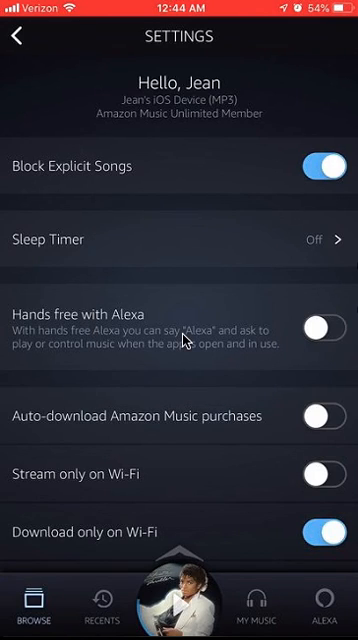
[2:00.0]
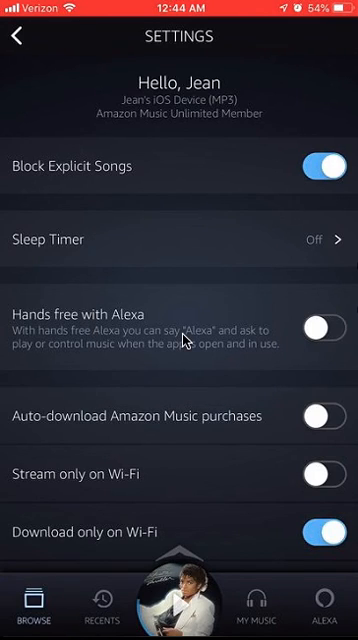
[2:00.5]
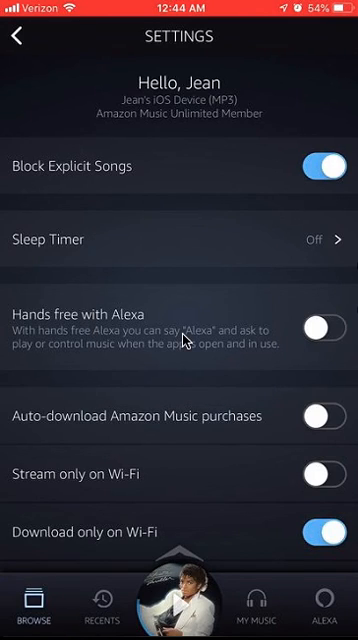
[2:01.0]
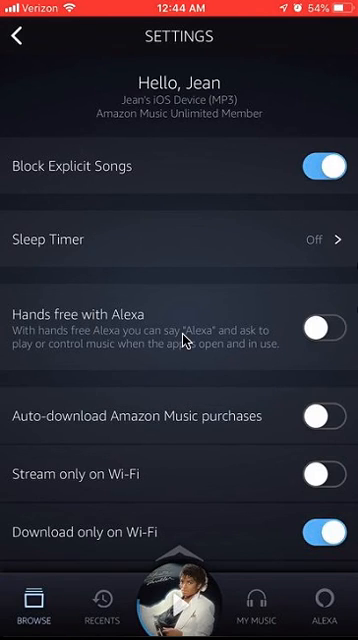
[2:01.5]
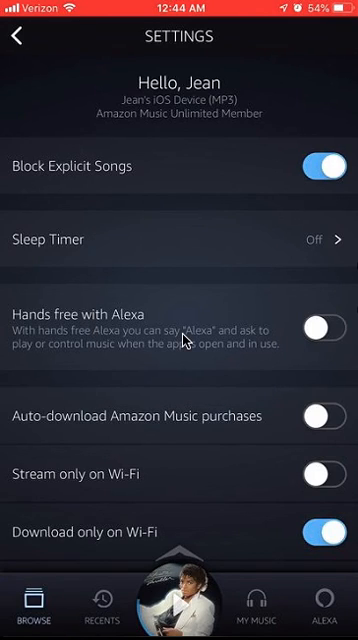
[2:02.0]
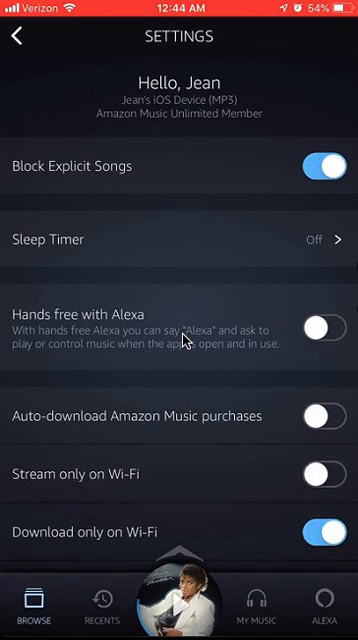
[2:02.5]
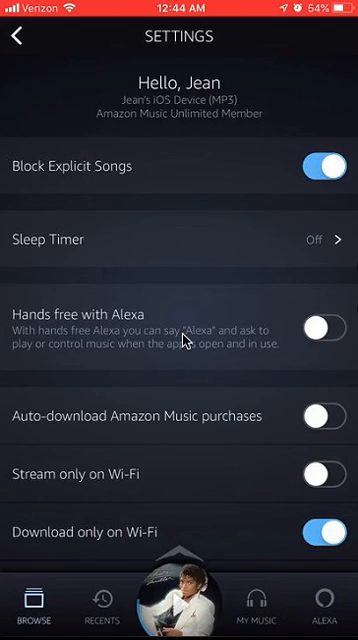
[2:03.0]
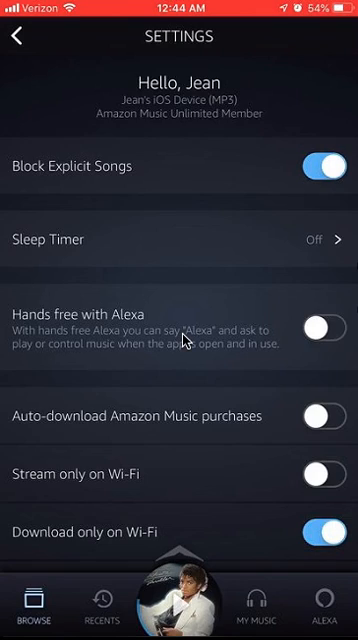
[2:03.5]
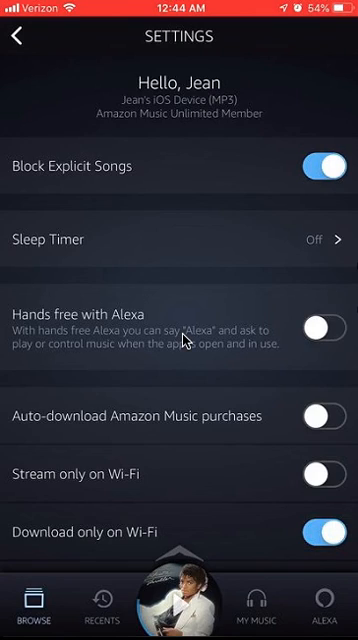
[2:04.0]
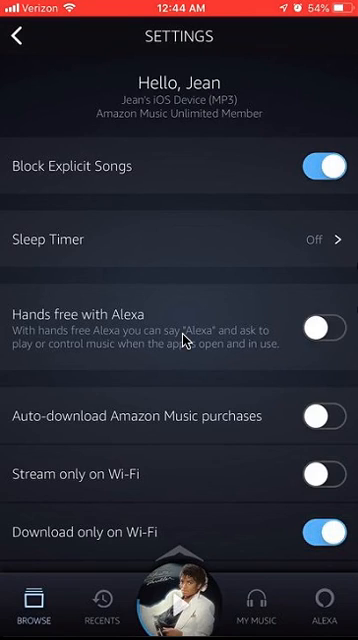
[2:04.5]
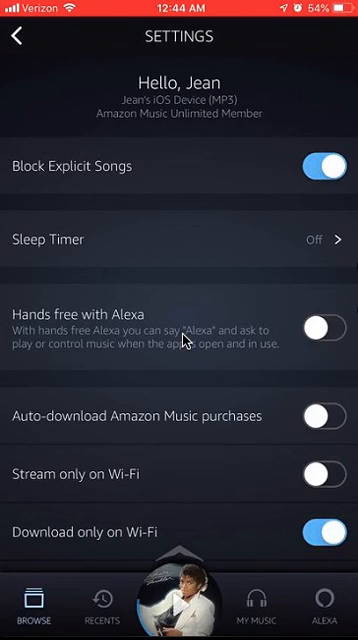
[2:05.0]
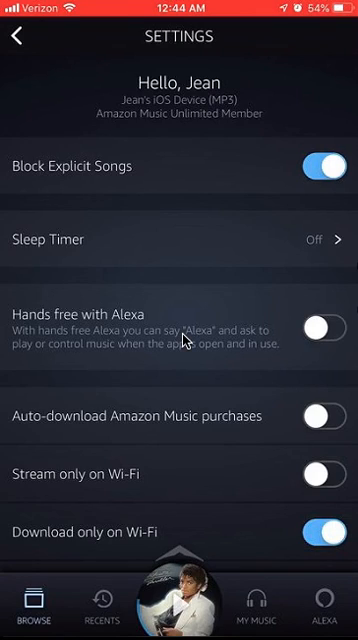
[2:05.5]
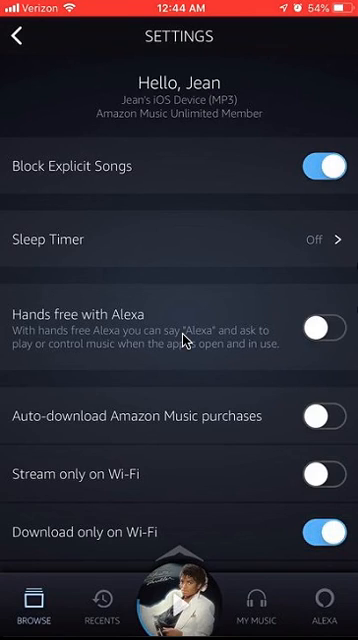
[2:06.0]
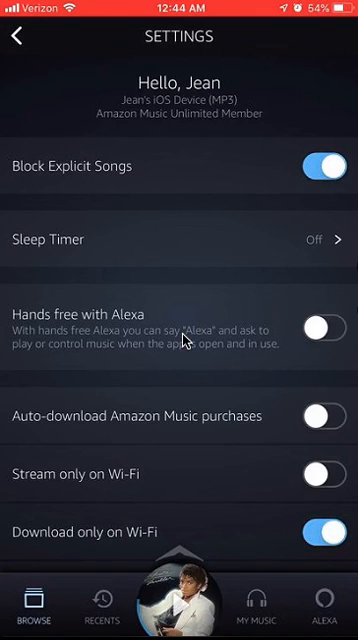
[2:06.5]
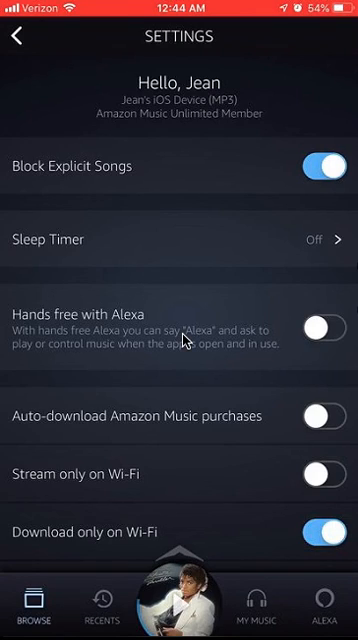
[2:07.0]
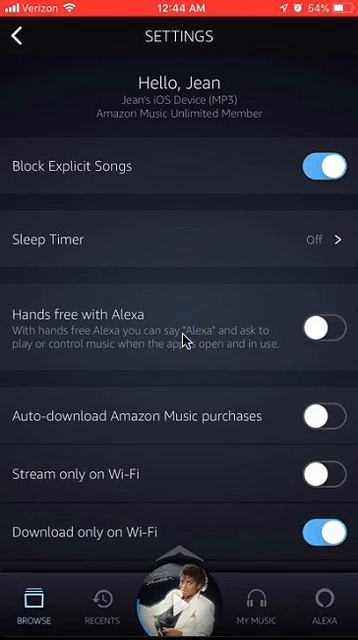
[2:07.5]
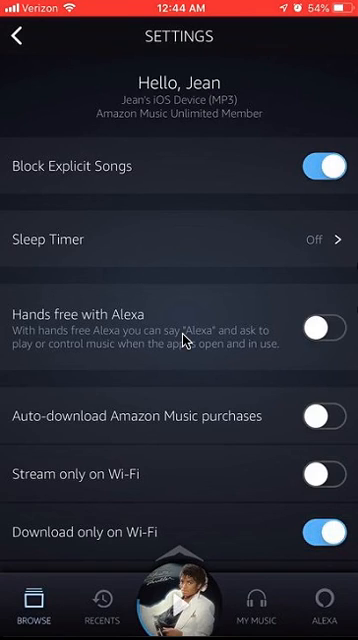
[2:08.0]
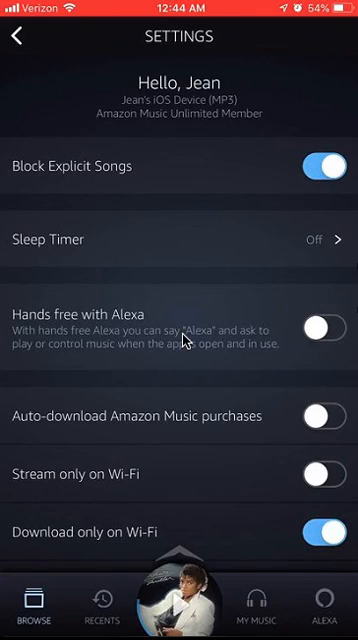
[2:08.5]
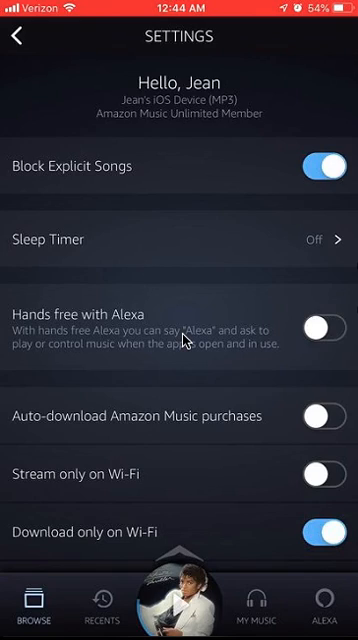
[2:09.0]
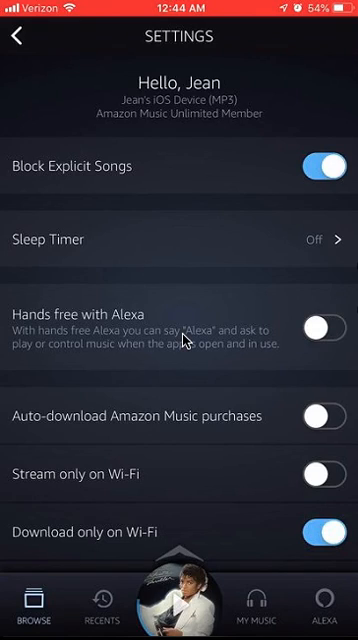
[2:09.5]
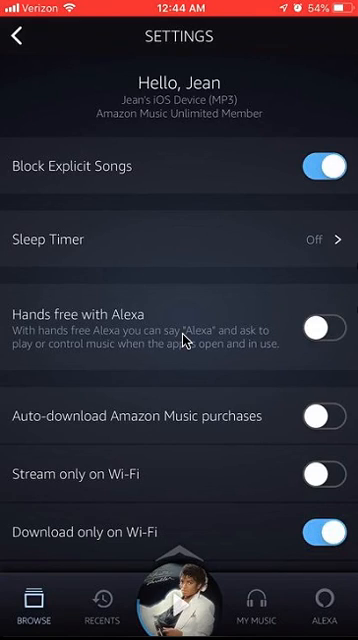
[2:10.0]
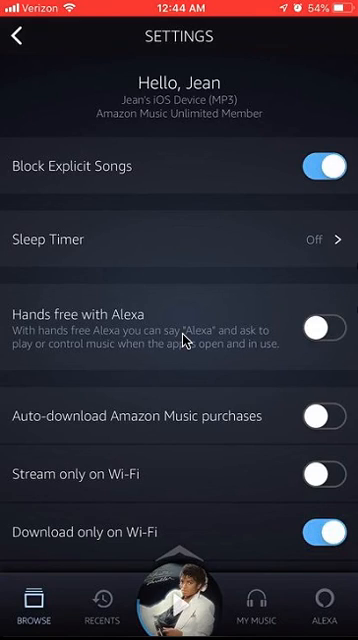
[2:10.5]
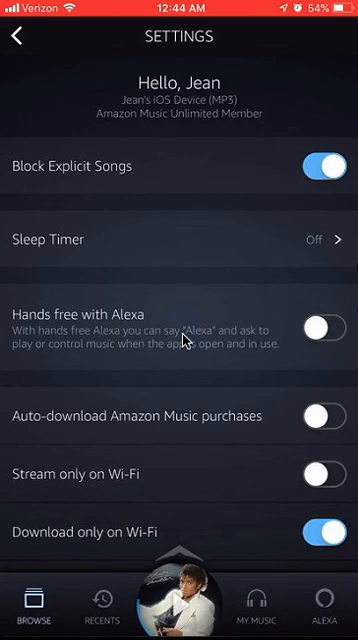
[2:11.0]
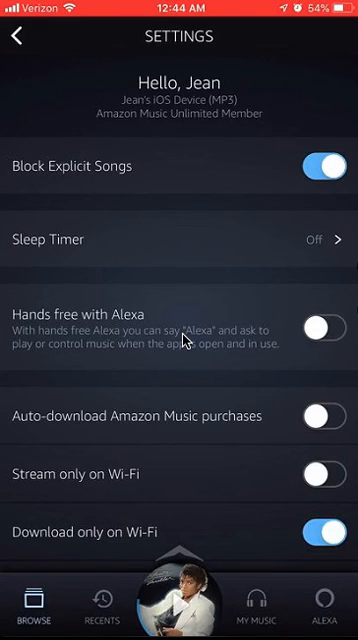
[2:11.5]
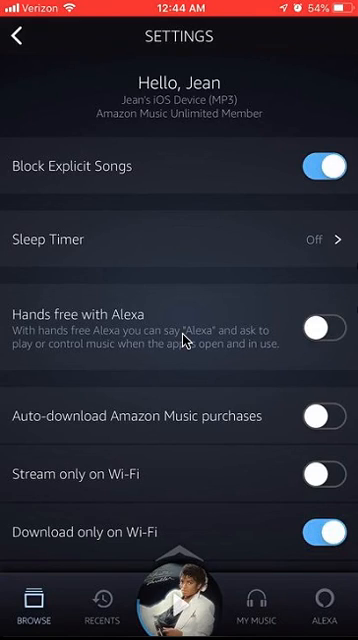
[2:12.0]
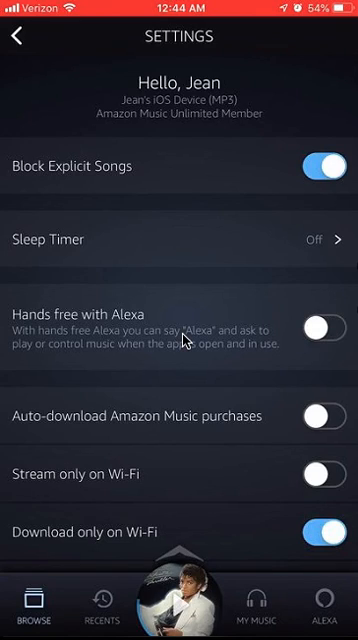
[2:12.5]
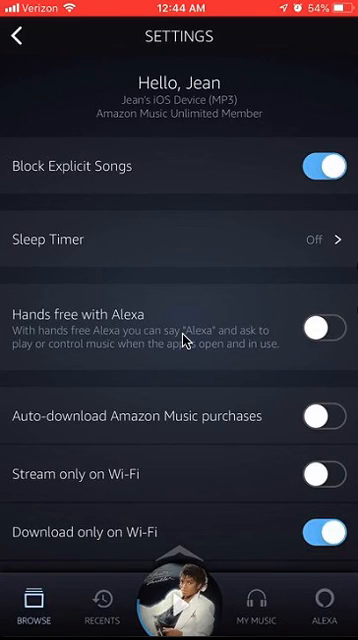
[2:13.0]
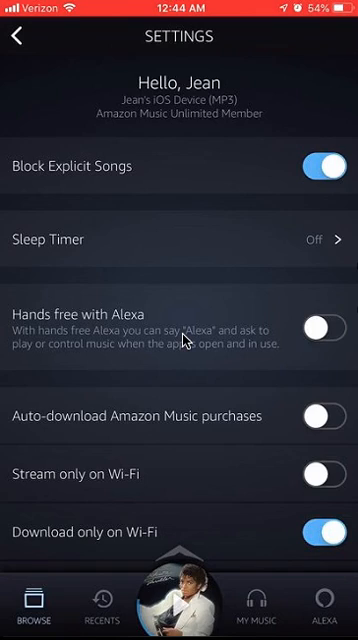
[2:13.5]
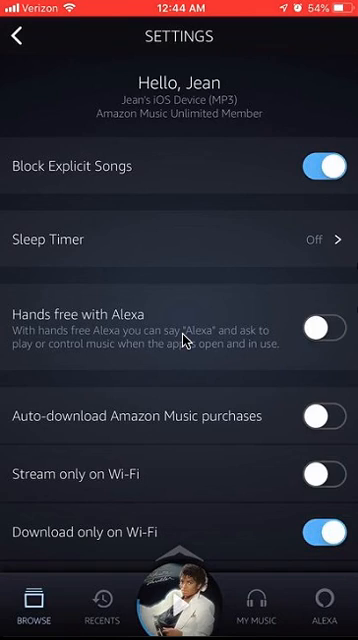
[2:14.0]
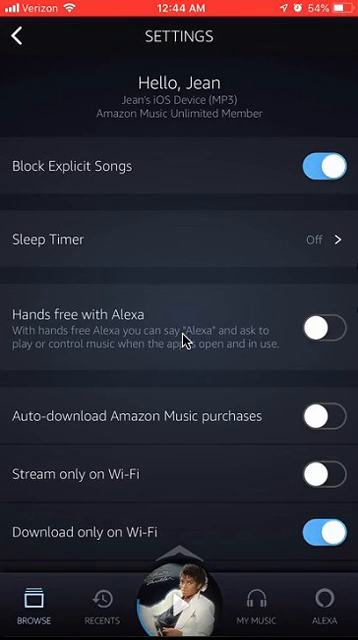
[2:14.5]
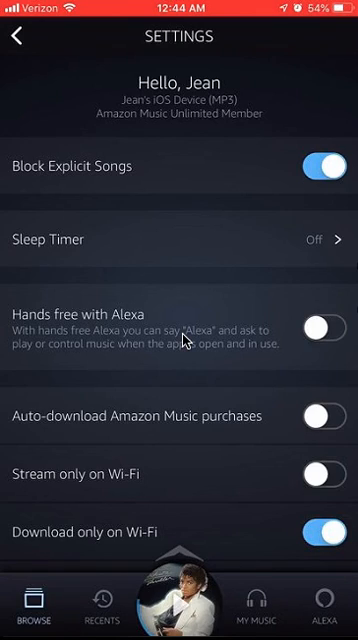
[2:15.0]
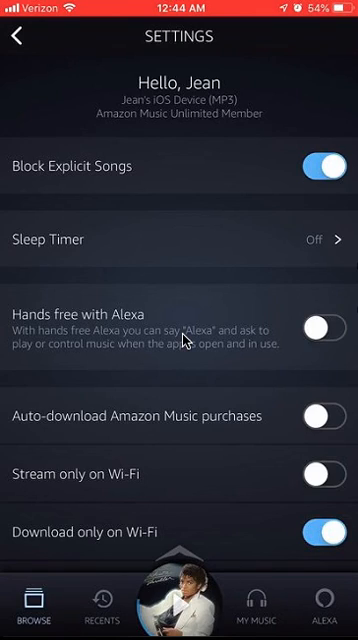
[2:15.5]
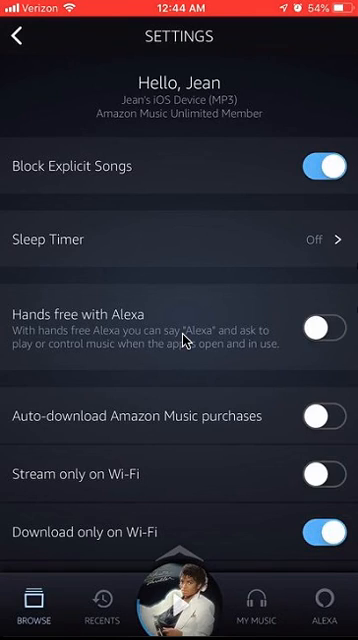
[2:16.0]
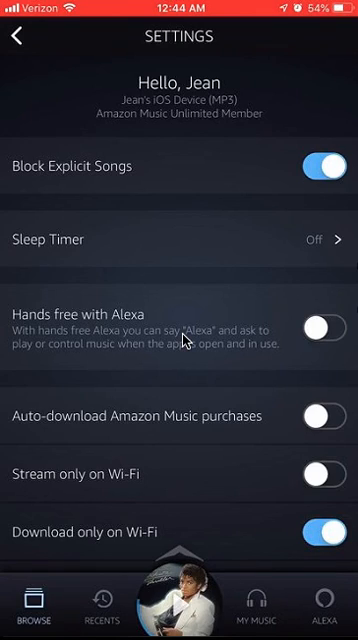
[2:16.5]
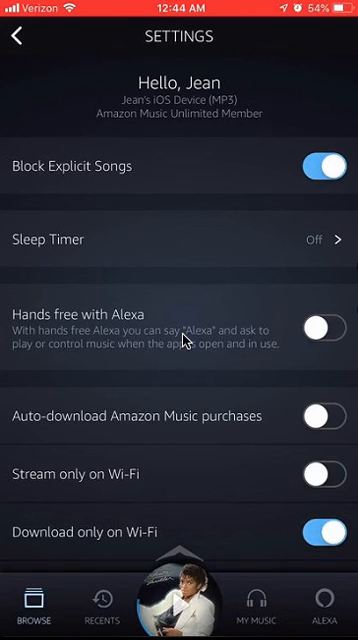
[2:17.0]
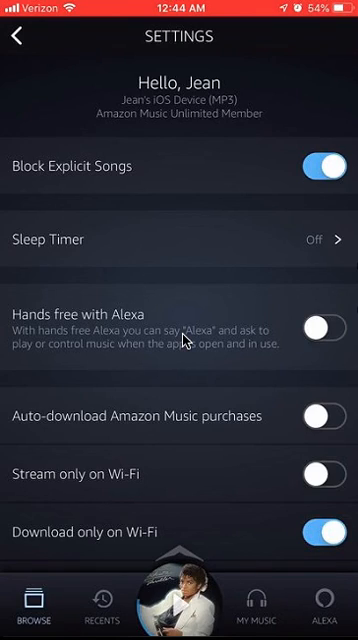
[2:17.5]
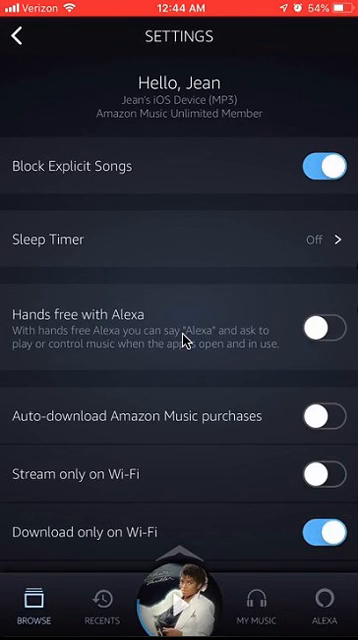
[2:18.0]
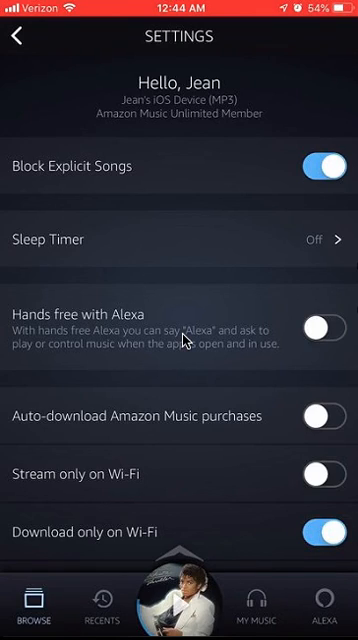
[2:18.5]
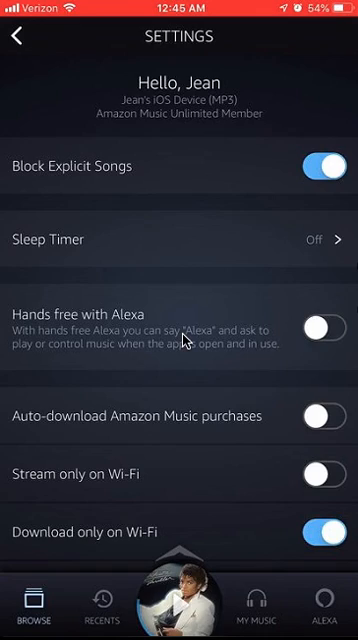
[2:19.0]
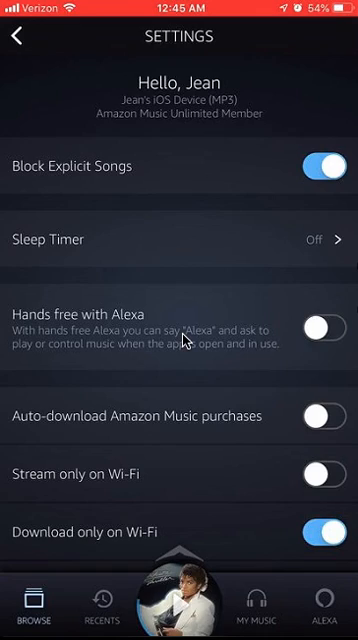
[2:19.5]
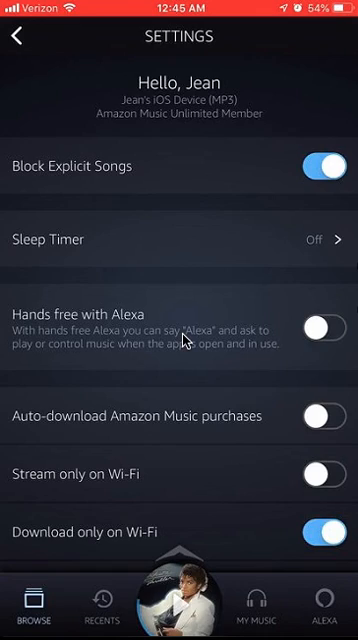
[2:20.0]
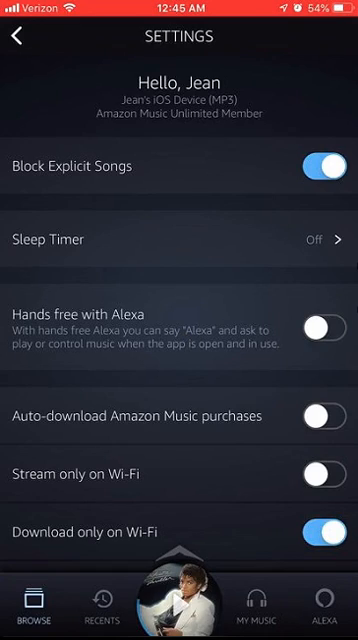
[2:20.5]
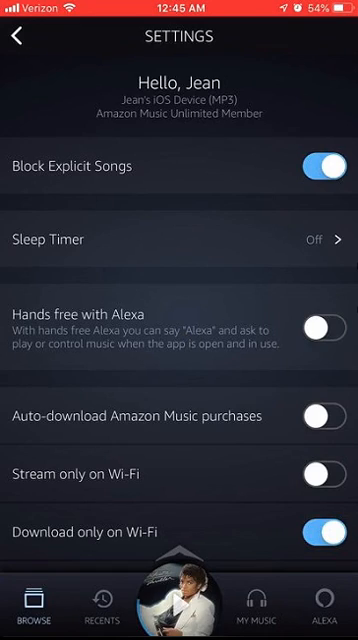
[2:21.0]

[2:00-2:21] The Amazon Music settings remain on screen with block explicit songs turned on. Other options include set the timer, hands-free with Alexa, auto download Amazon Music, stream only on Wi-Fi, and download only on Wi-Fi. The user stays on this settings page without making any other changes. A Verizon icon is at the top, the battery appears to be at 54%, and the time looks to be 12:45 am. The user's name appears to be Gene, on what looks like an iOS device, apparently playing MP3s through Apple Music, and he seems to be an unlimited member.